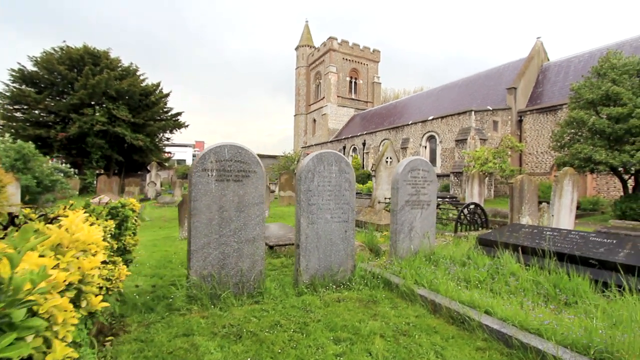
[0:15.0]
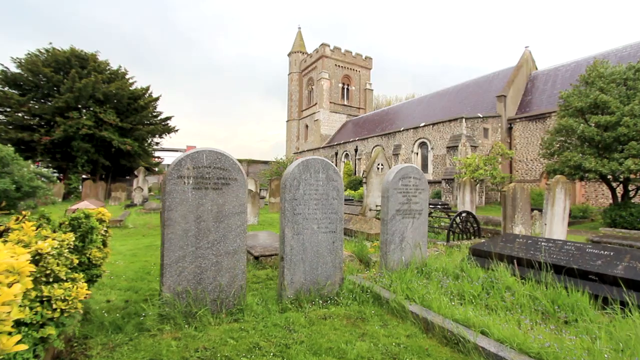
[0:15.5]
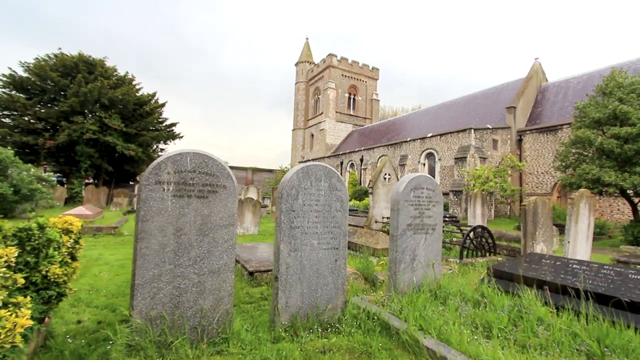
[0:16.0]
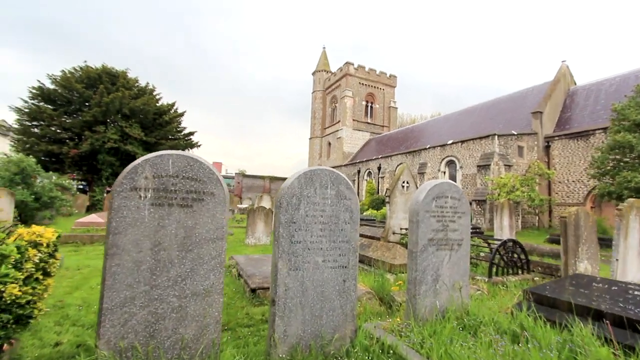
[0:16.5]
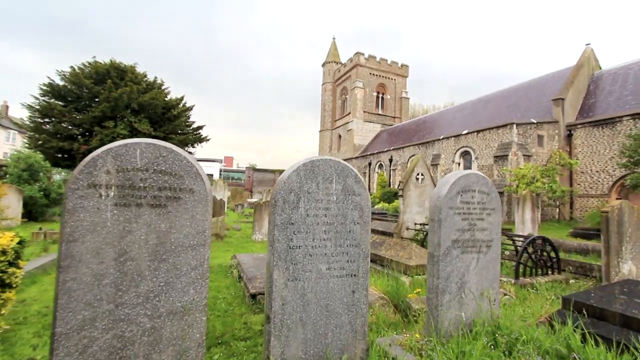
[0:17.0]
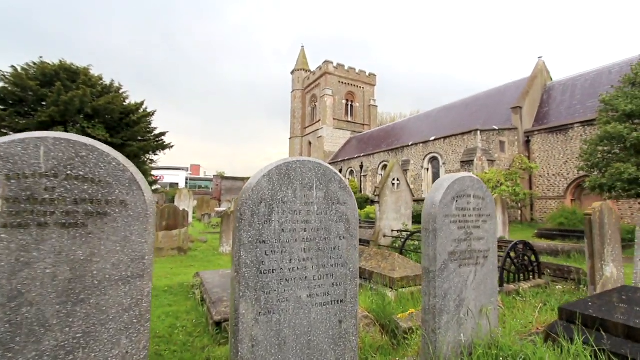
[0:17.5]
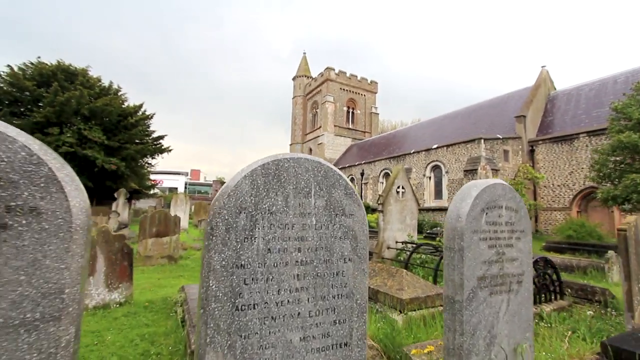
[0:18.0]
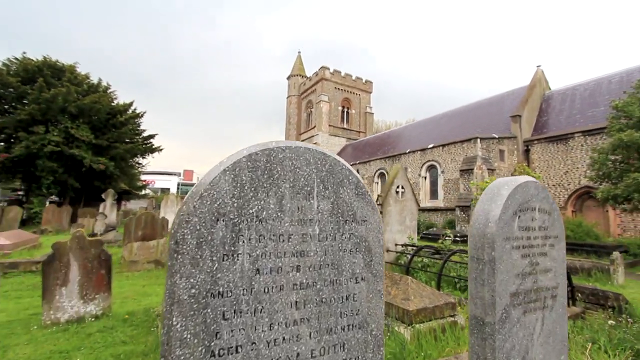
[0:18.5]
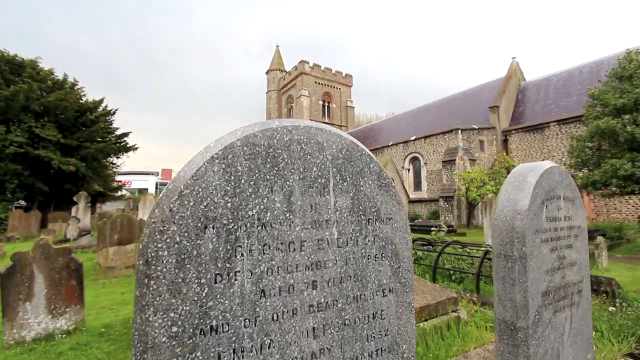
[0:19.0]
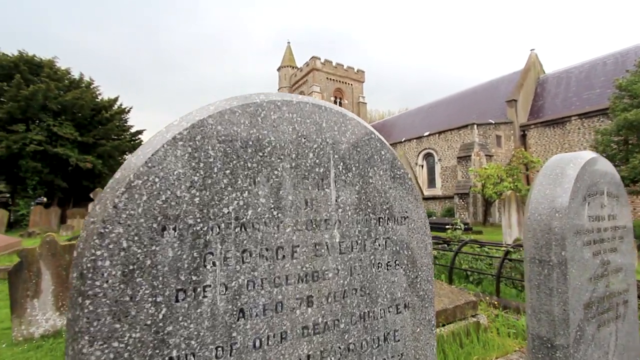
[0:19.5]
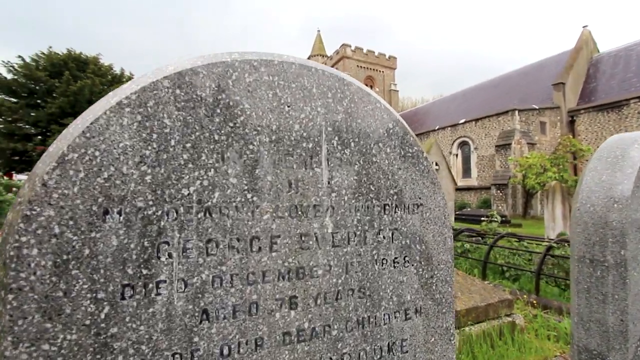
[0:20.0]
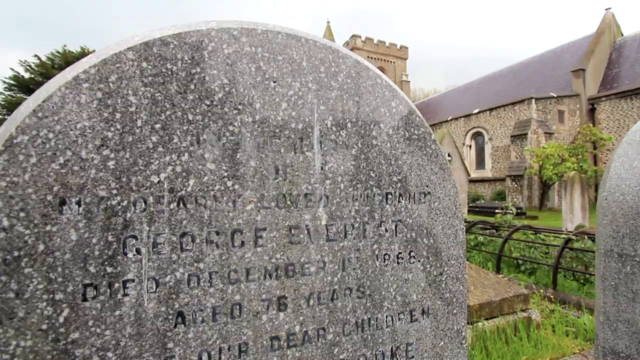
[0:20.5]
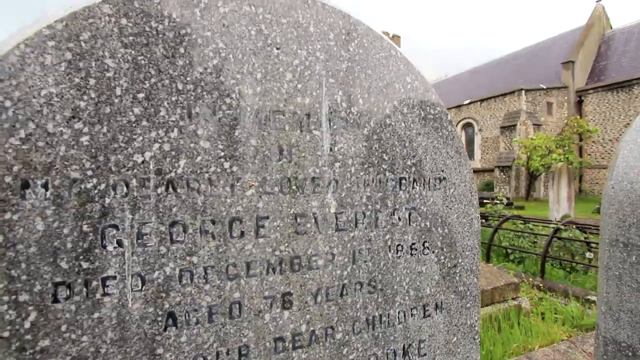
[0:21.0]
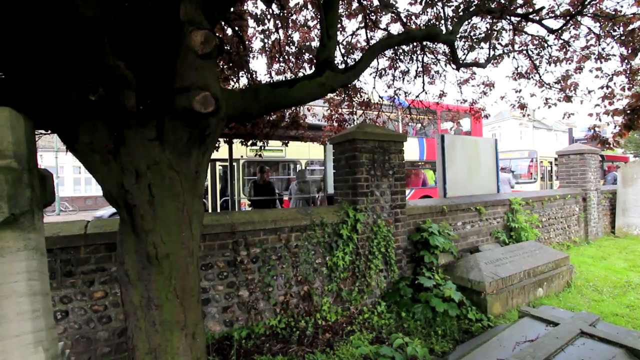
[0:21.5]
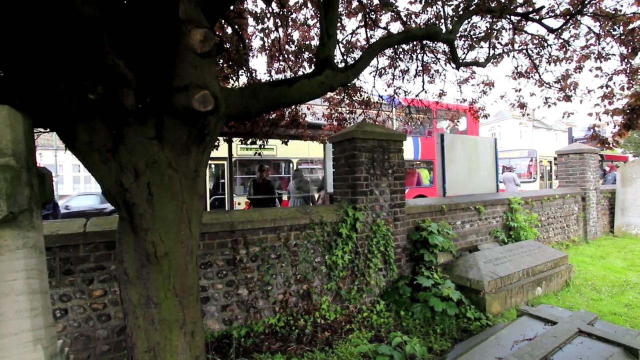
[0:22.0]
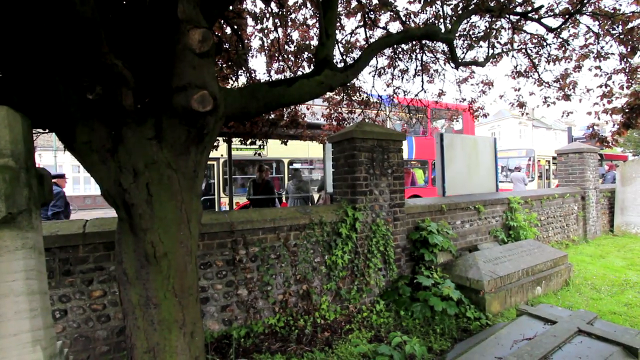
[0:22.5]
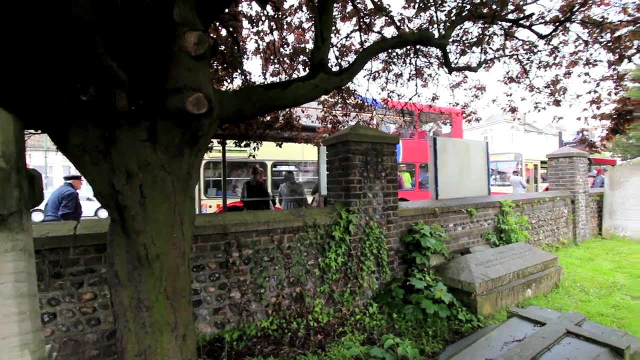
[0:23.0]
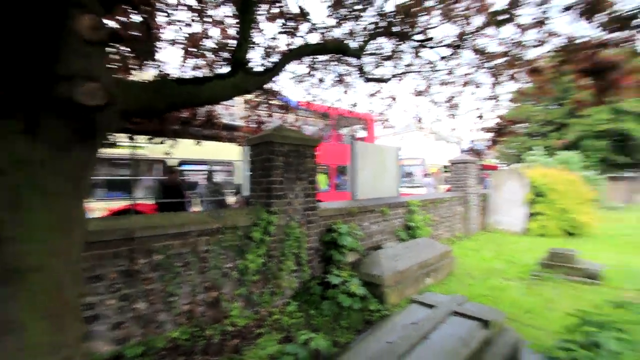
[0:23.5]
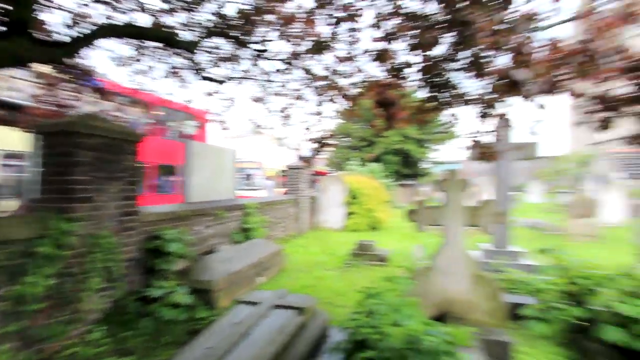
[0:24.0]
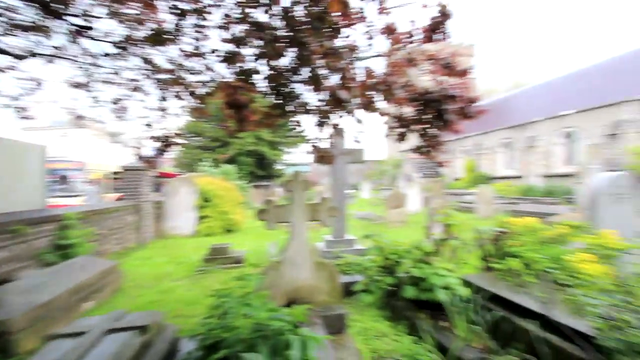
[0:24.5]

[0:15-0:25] In the cemetery, the view zooms in on one of the gravestones, which appears to read "George Everest," though the carved lettering is hard to read. The camera pans from left to right and then zooms in on the headstone. During the pan, a bus is visible in the background along with a busy street with people on it. The churchyard and its cemetery are next to the busy street, separated from it by a fairly low brick wall, and there is a lot of green grass, shrubbery and trees around. Most of the gravestones are stone and arched, maybe about three or four feet tall. Ivy grows against the brick walls on the left, the church is at the back right of the image, and the sky is kind of whitish-blue. The view zooms in on the gravestone repeatedly, and up close the carving says something about George Everest.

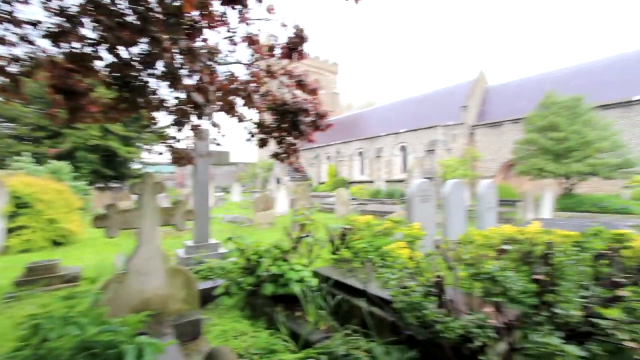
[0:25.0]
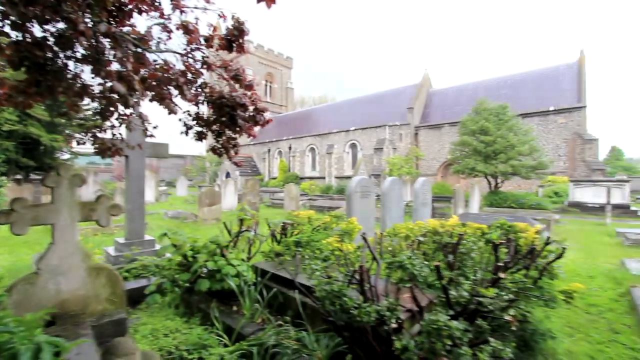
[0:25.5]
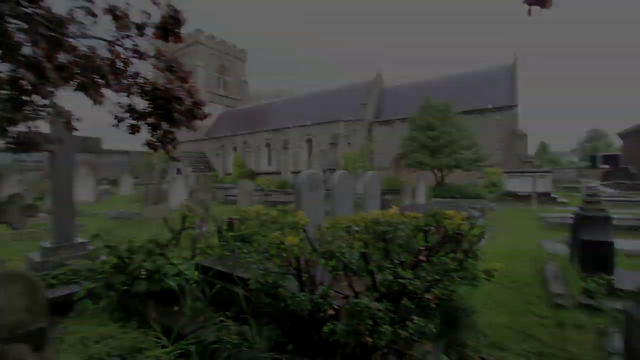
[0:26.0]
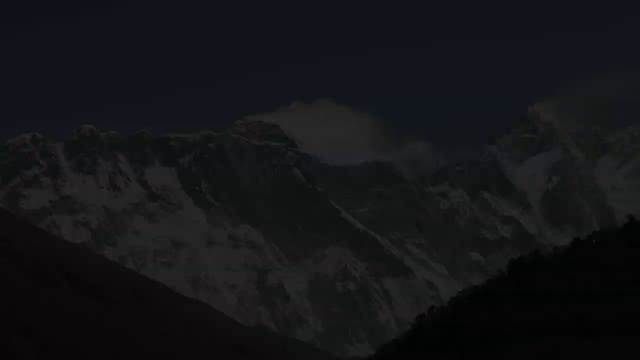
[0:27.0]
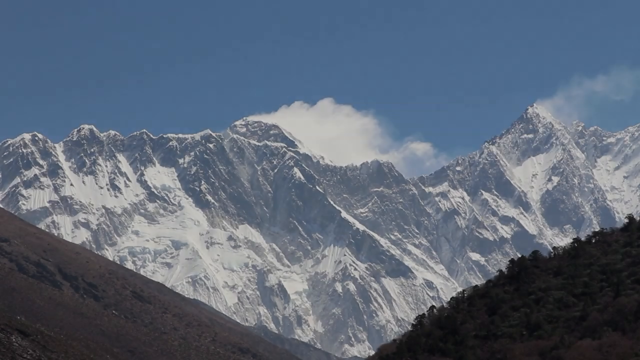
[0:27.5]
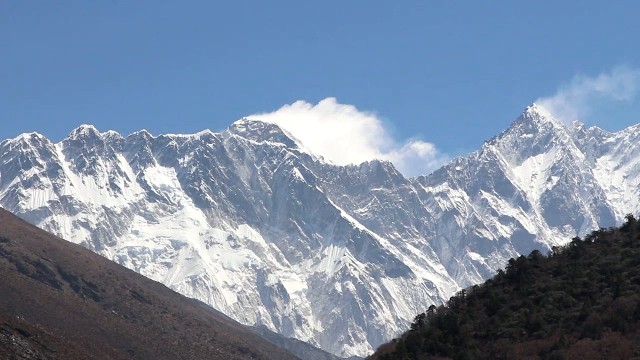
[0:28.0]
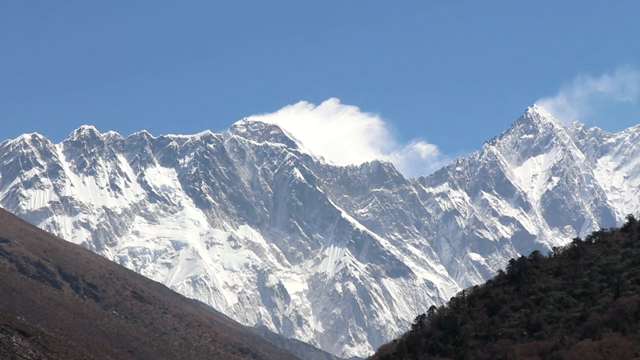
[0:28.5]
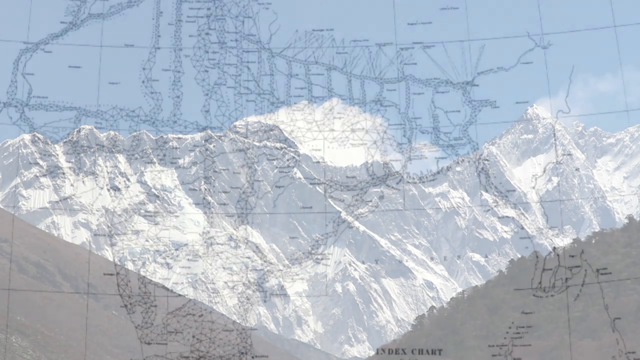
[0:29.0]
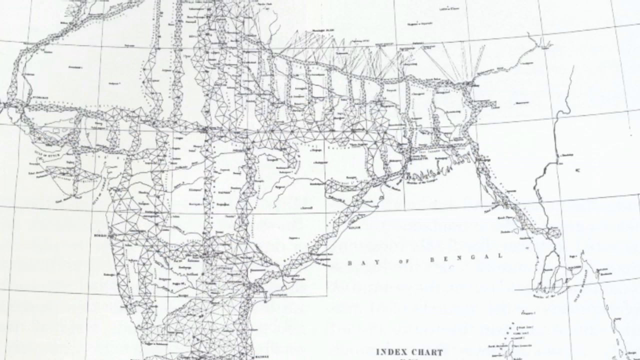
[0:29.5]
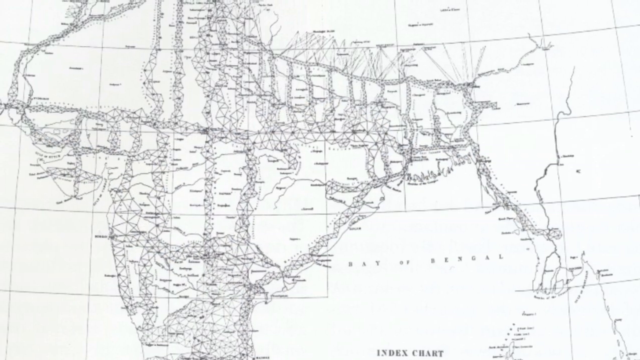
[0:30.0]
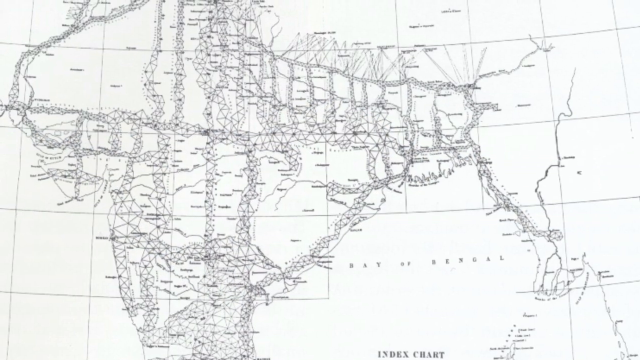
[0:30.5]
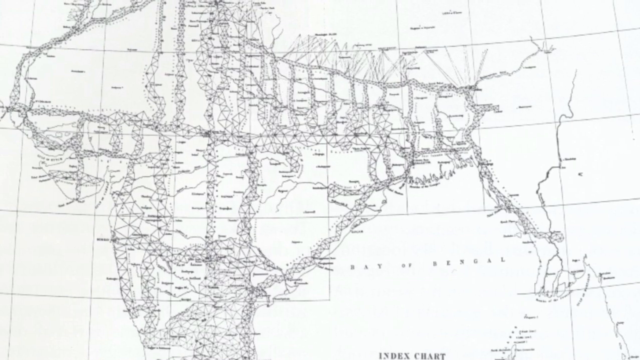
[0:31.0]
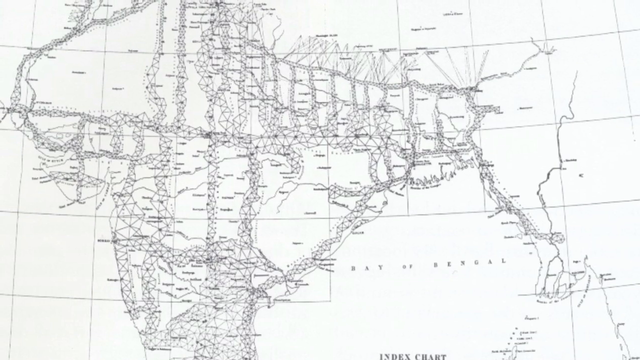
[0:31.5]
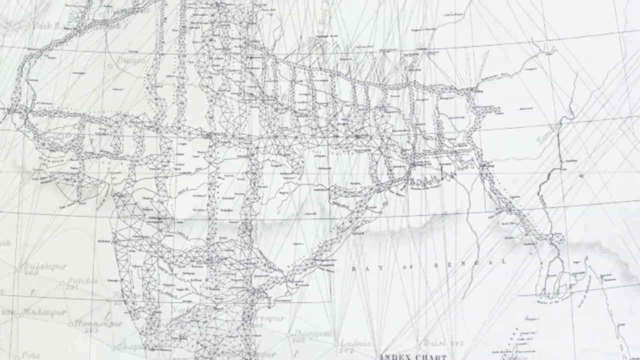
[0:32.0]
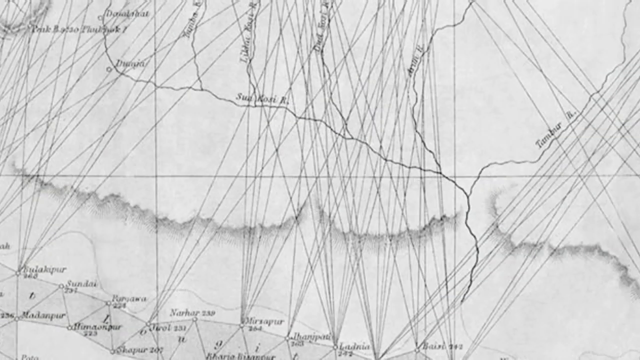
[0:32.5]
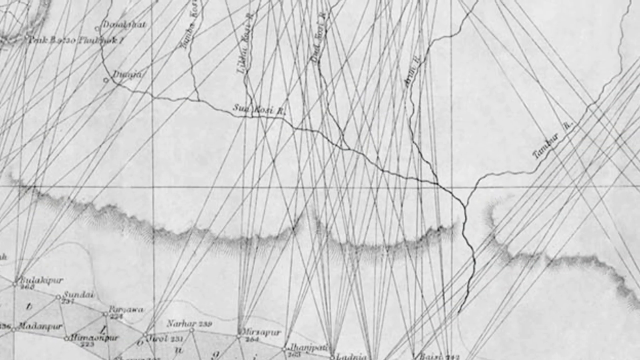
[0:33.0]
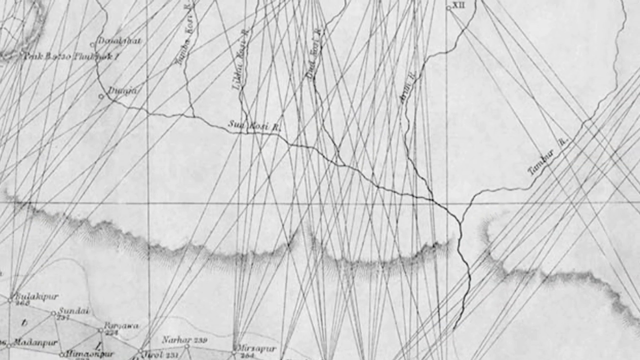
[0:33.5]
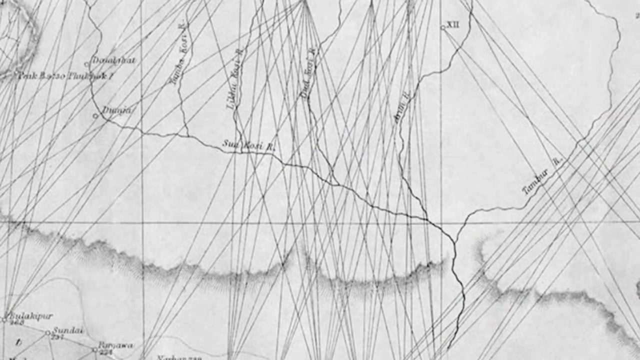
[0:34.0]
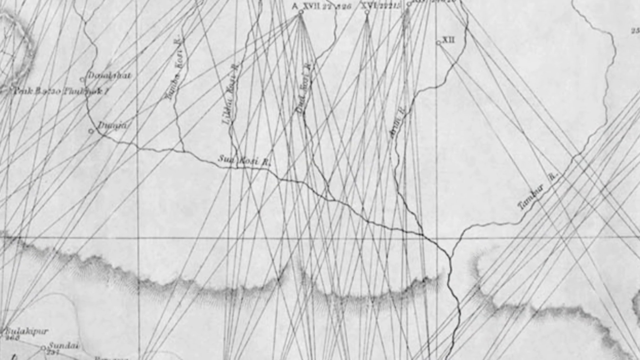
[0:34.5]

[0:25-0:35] The video cuts from the churchyard back to the outdoor picture of the mountains and then to the white map, cycling between these three images. The white map has many straight lines on it and is presumably an explorer's map; two images of it appear, one farther away and one closer up. The churchyard is shown from a different angle, with the church in the background and green grass holding maybe a dozen or so gravestones, many curved and arched, one of them a cross, all apparently stone. The map seems to show what looks like Africa before zooming in closer; it is white with black lines, with the Bay of Bengal labeled in the lower right and many rivers labeled. In the mountain image, presumably of Everest, the mountains fill the bottom two-thirds, and the upper part is blue sky with white clouds.